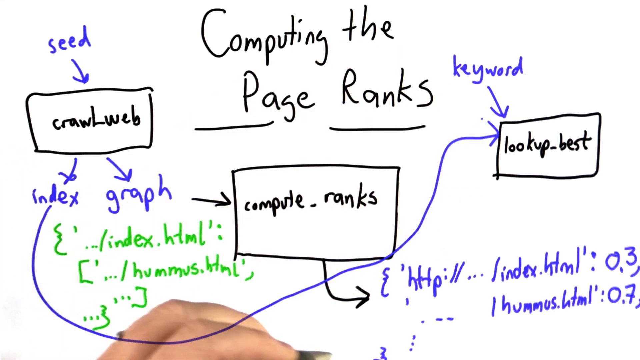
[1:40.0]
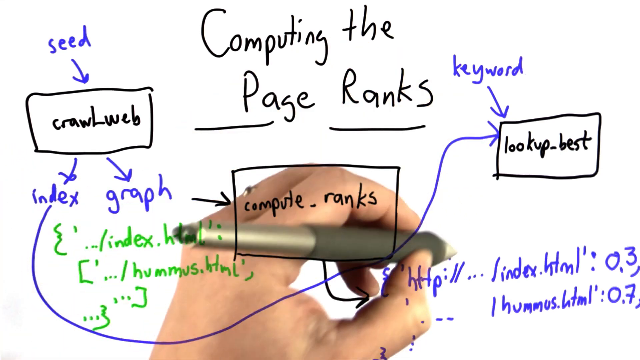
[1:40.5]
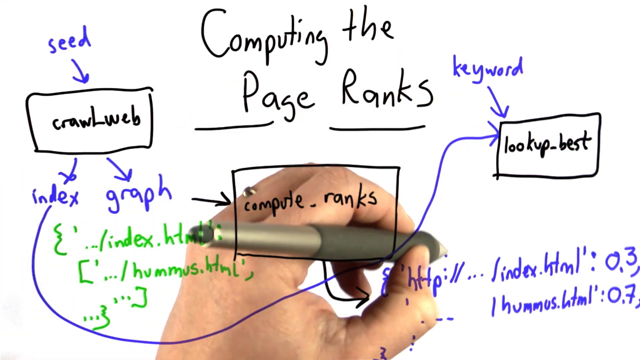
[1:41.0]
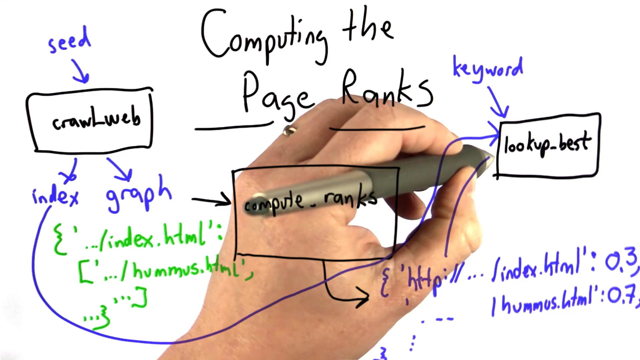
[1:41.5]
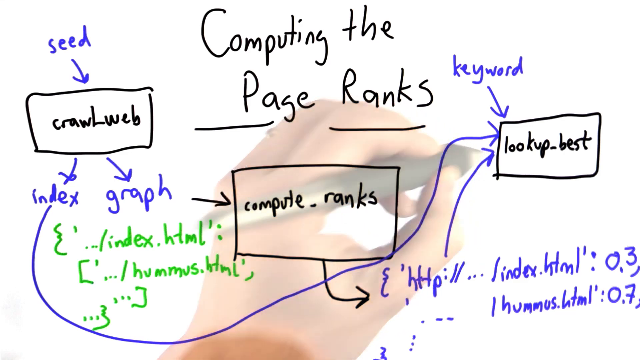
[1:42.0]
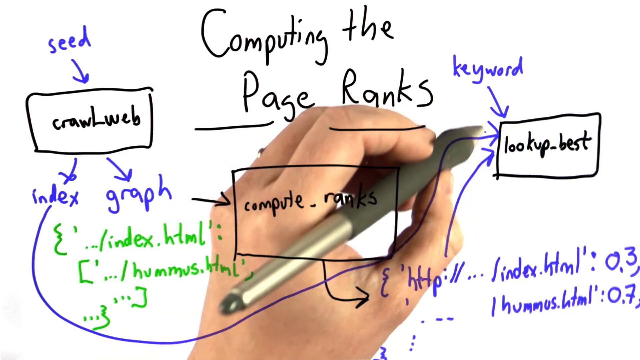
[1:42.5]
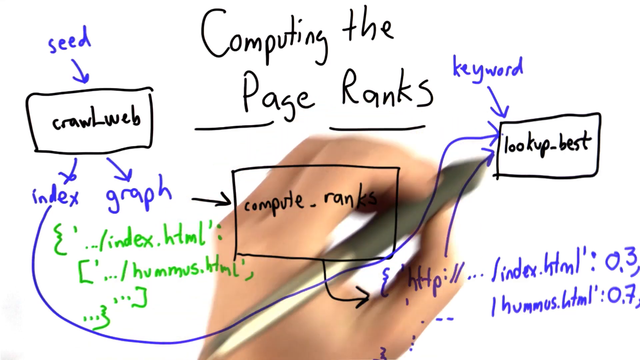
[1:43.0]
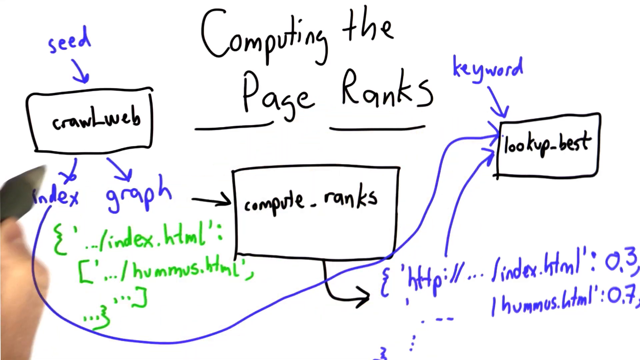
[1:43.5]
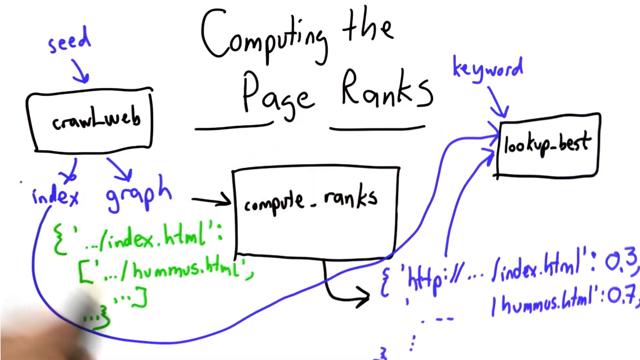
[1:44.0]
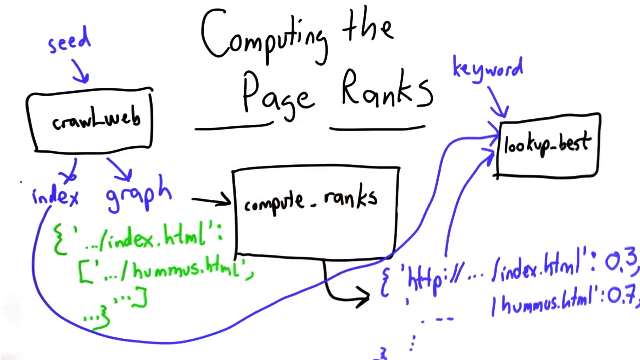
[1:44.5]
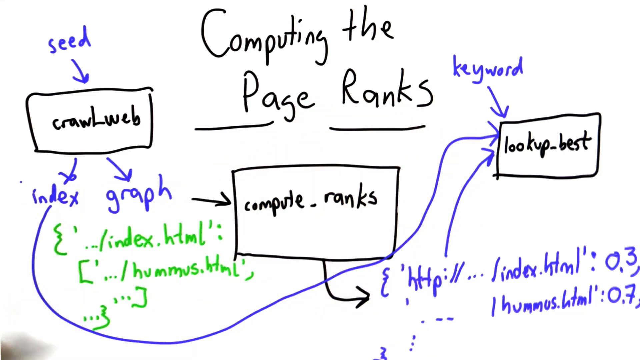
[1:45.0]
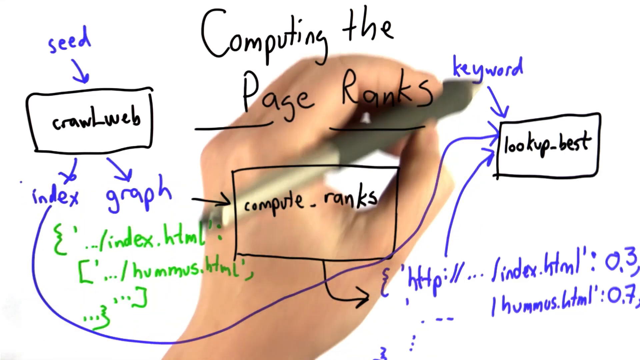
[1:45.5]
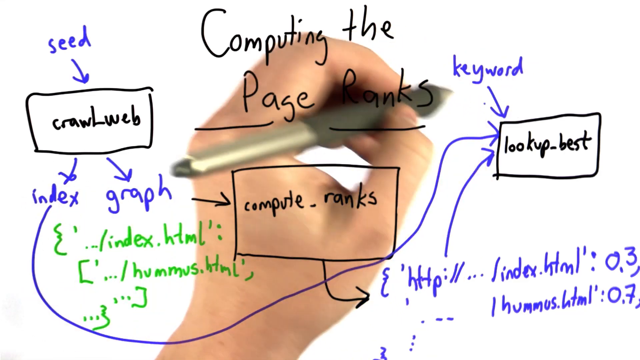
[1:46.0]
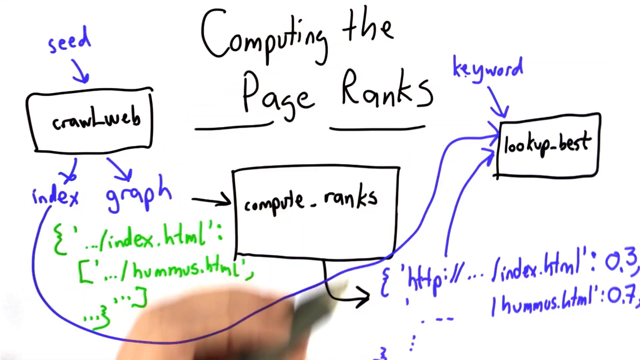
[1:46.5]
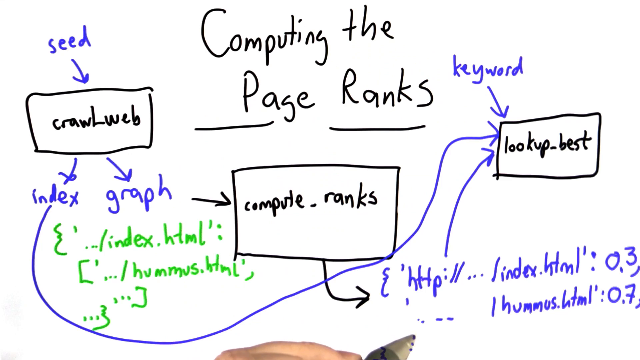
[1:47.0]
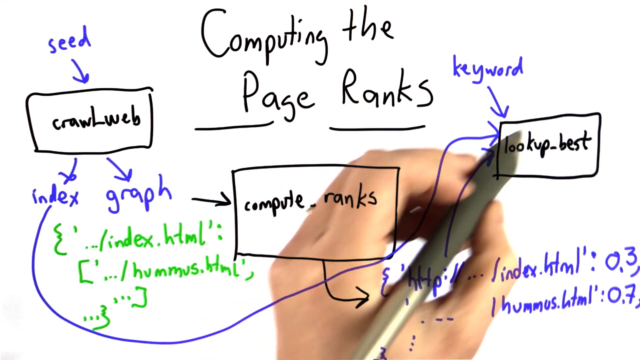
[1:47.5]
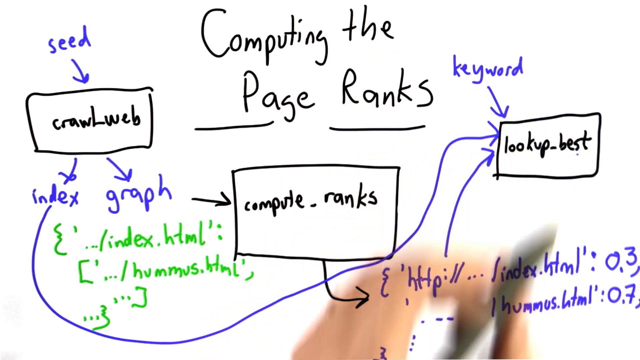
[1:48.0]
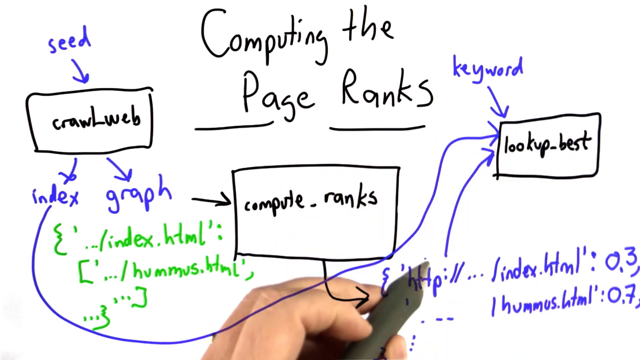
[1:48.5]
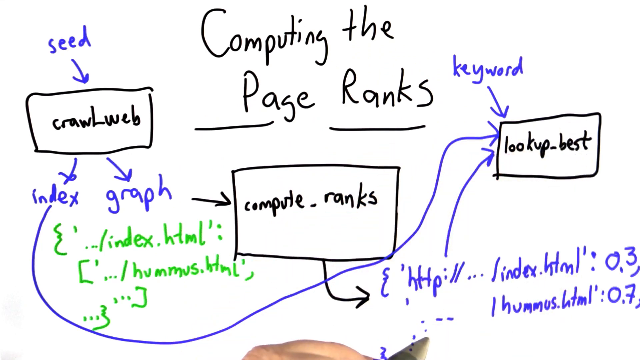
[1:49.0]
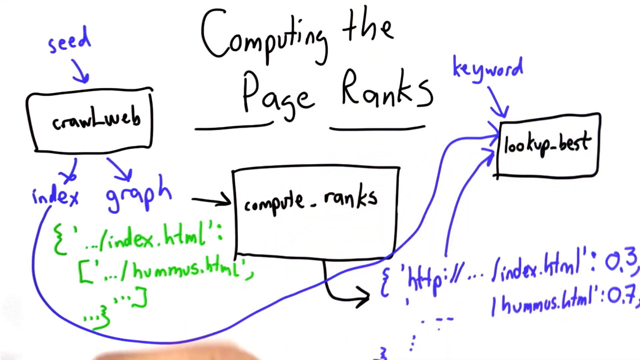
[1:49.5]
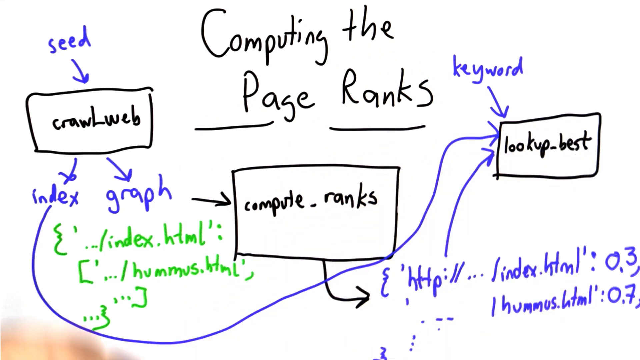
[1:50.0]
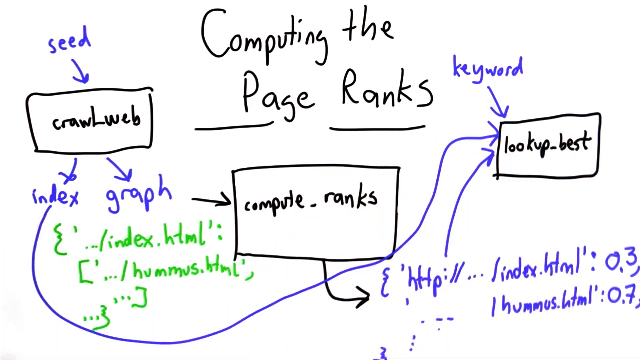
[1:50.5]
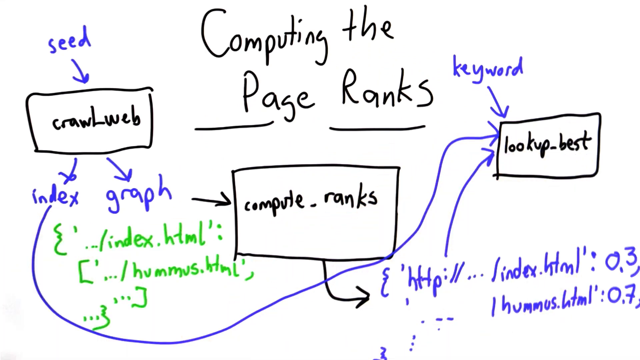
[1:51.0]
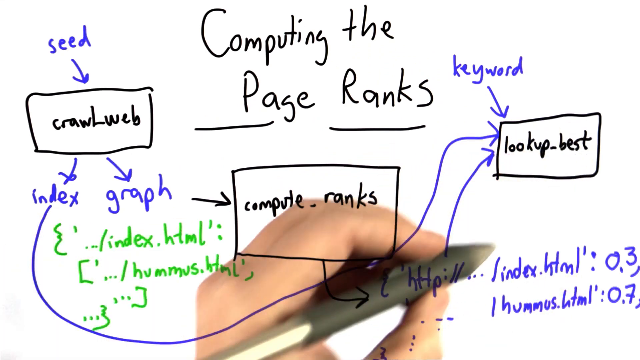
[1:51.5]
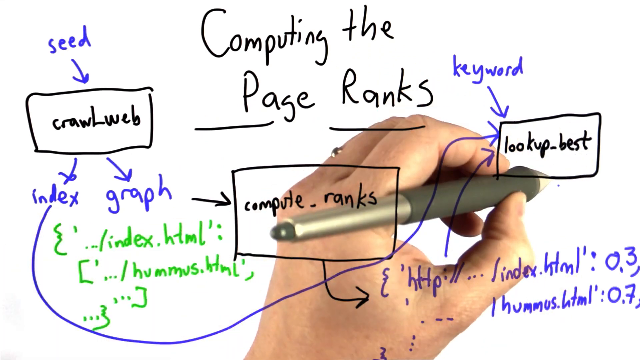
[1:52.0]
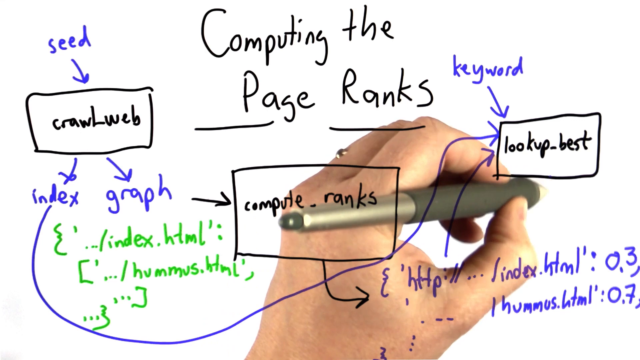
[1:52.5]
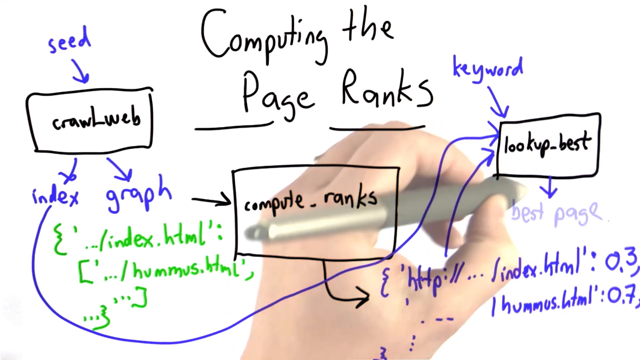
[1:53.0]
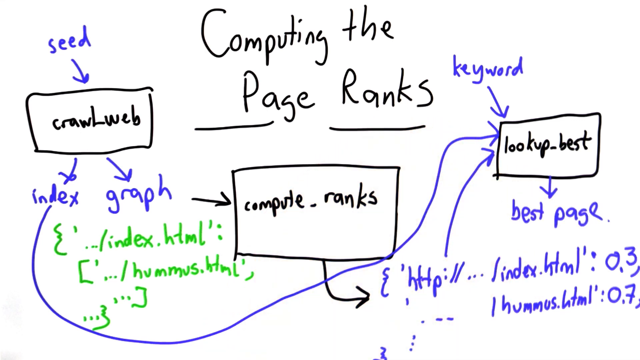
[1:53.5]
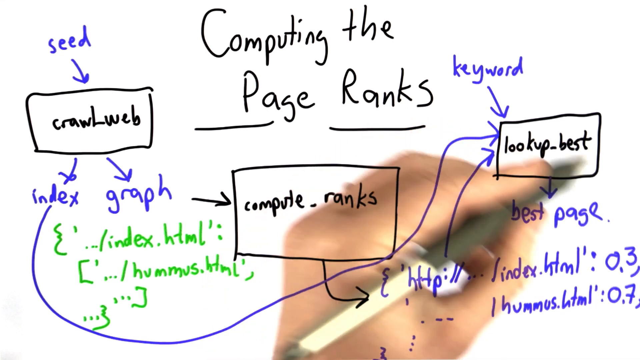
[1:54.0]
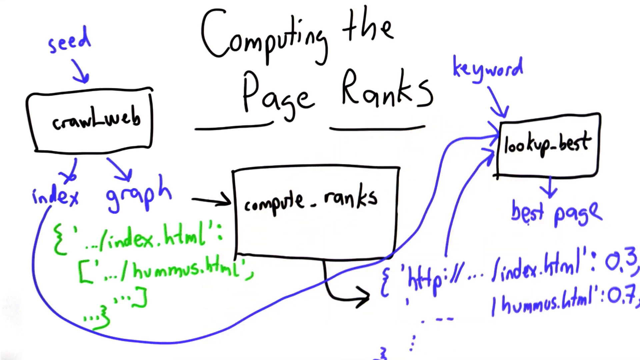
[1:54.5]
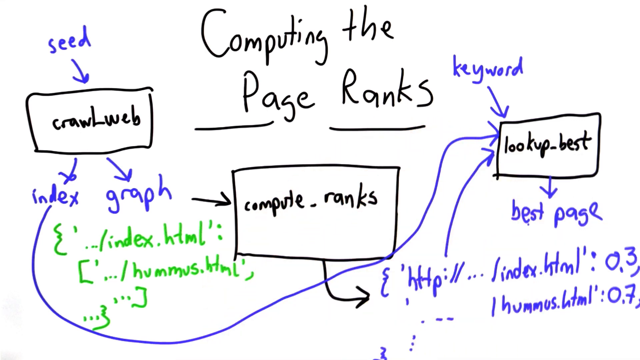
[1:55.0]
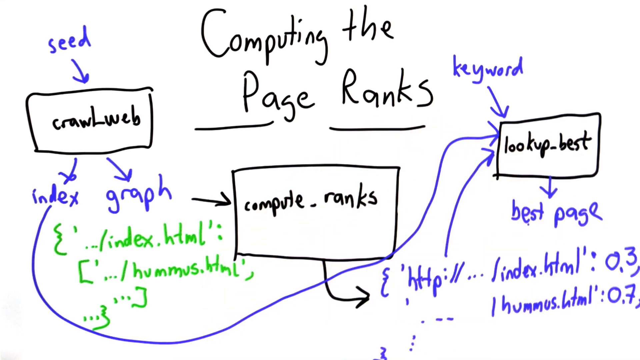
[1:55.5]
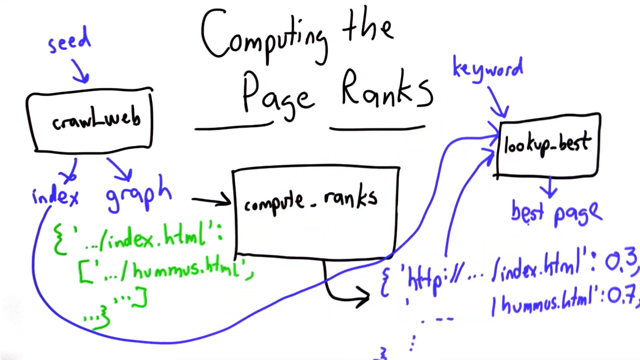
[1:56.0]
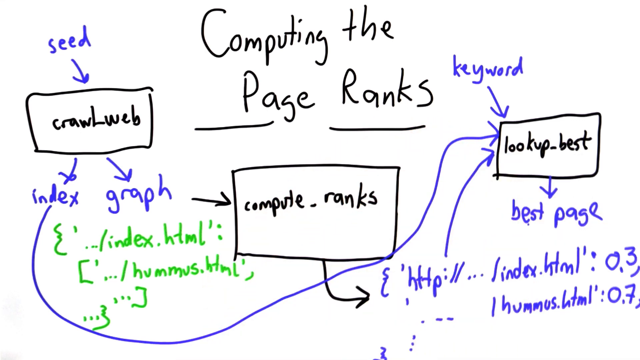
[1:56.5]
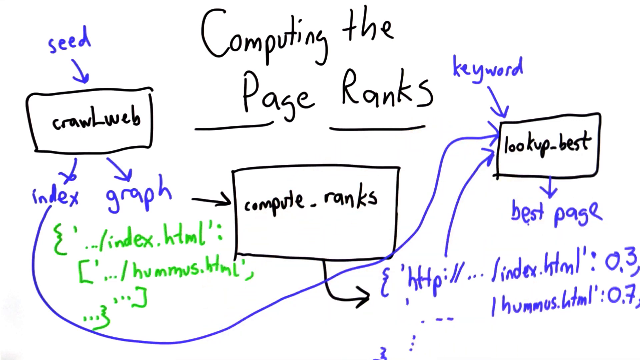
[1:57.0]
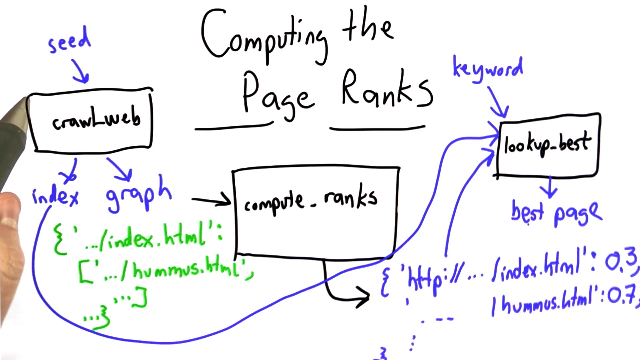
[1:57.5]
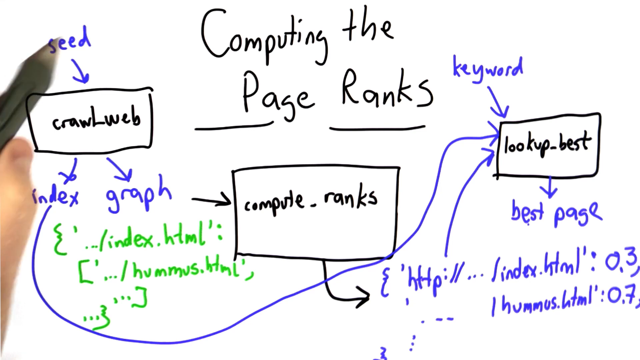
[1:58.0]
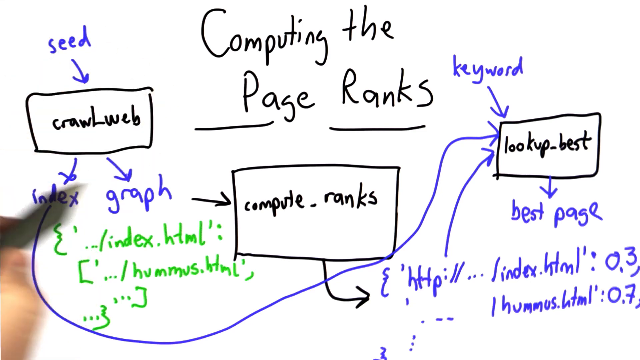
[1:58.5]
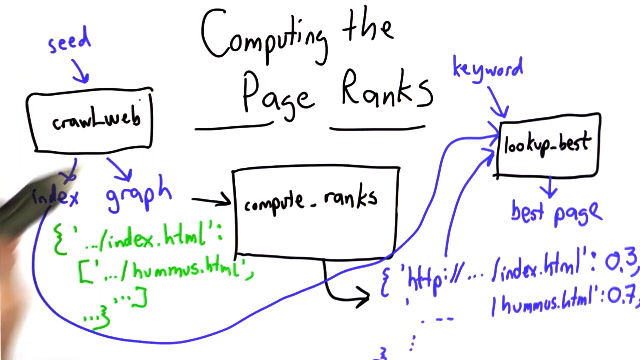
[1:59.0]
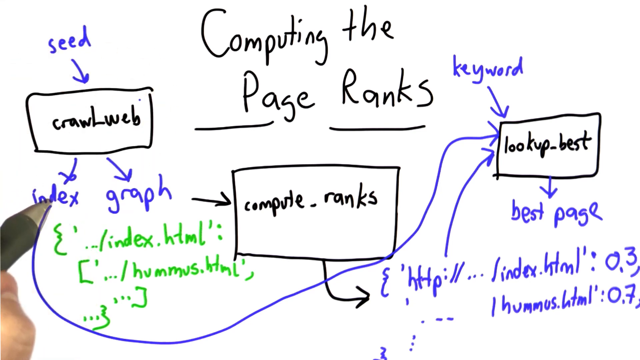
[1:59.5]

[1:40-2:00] Arrows run from the index on the left to lookup best on the right; the keyword also points to lookup best, and the code written below points to it as well, so three arrows converge on lookup best. Right below it, "best page" is handwritten with the pen. The pen points from item to item in the diagram.